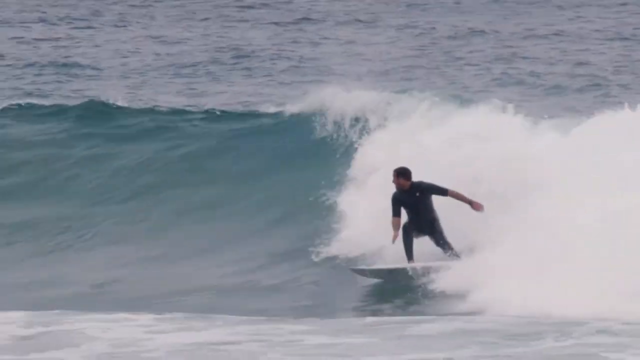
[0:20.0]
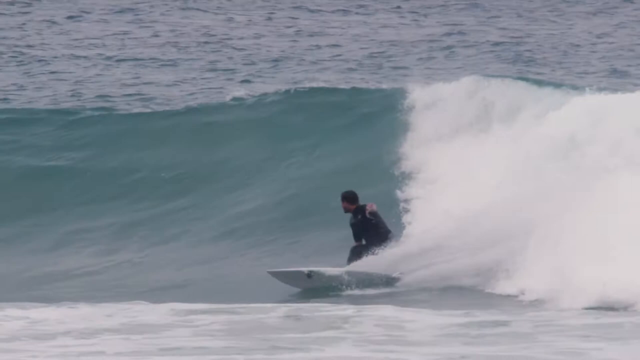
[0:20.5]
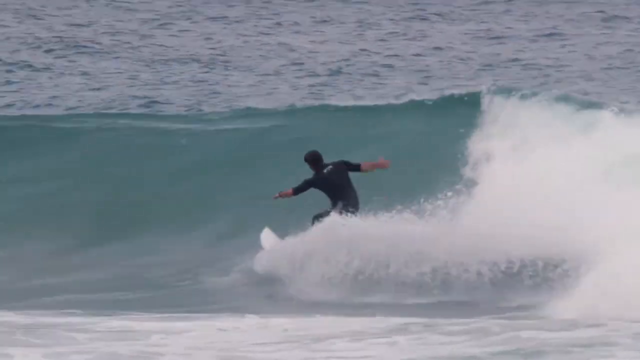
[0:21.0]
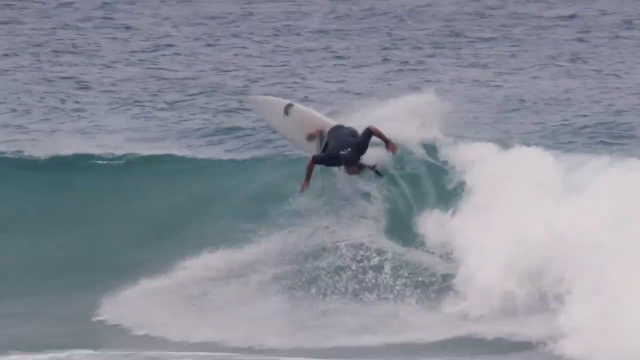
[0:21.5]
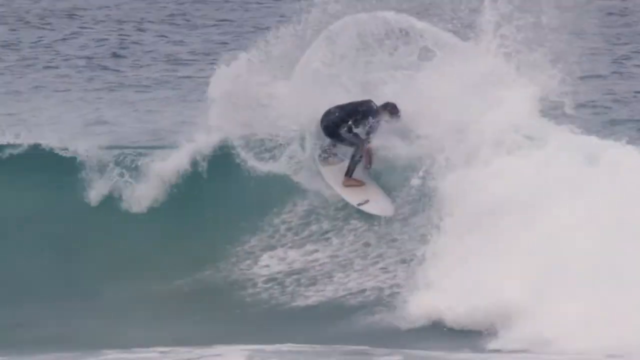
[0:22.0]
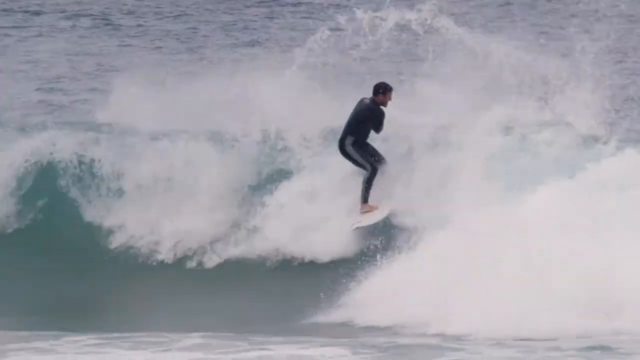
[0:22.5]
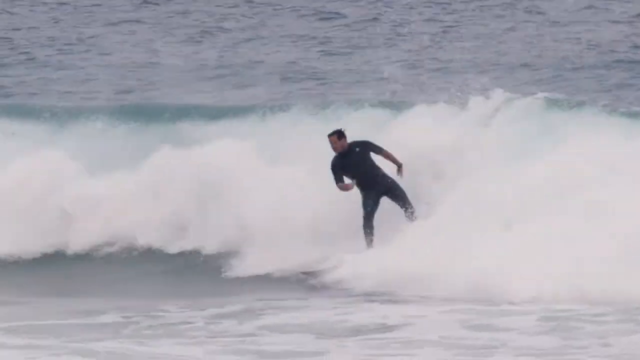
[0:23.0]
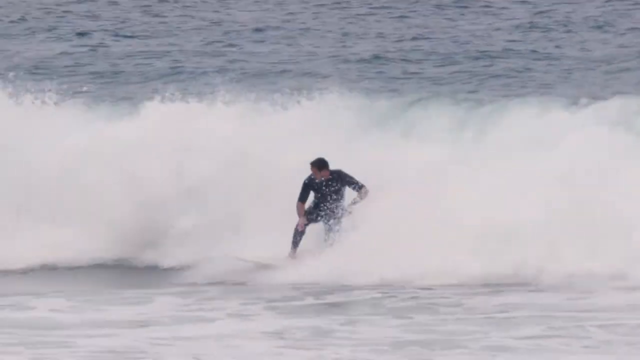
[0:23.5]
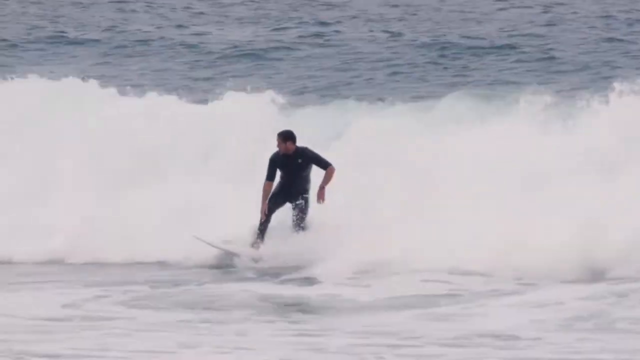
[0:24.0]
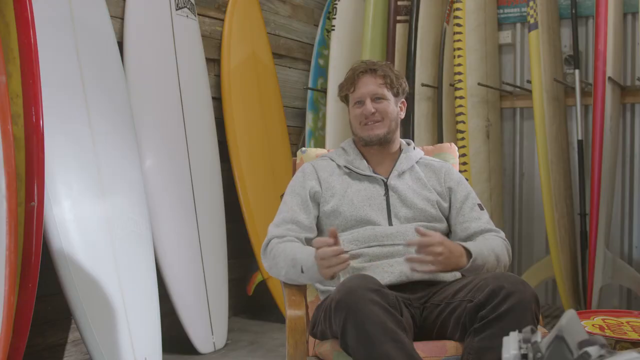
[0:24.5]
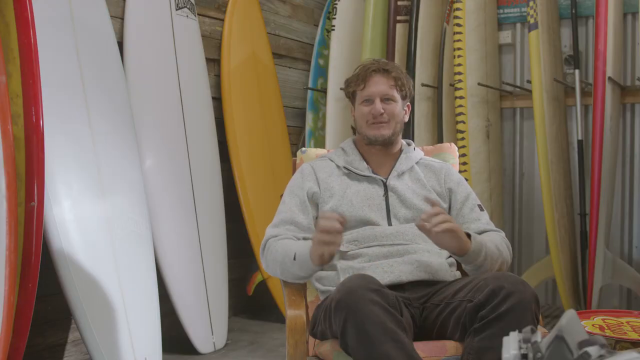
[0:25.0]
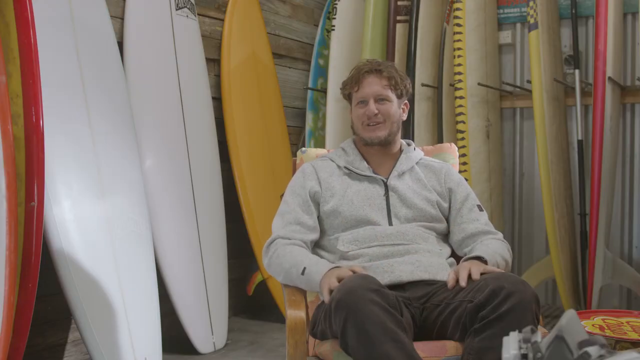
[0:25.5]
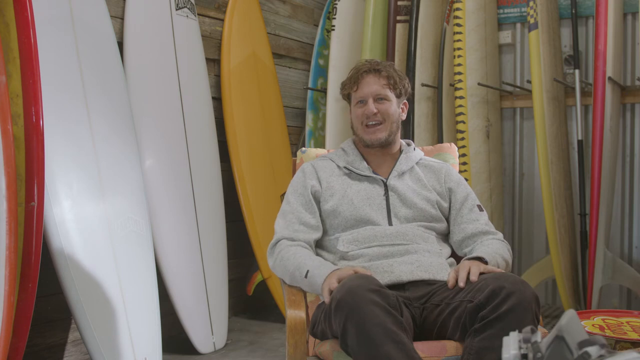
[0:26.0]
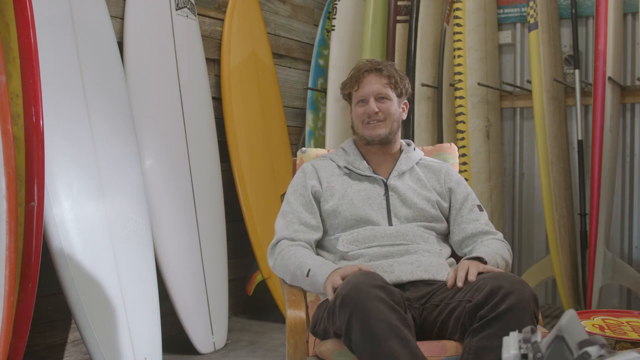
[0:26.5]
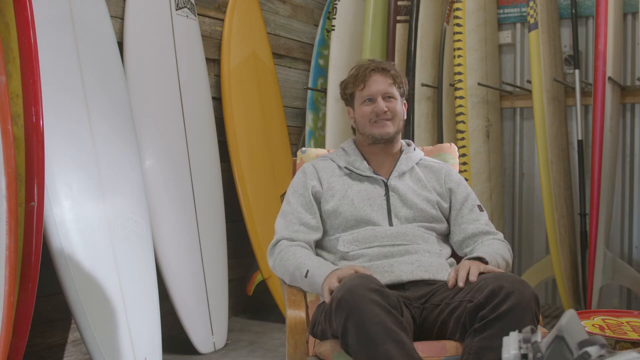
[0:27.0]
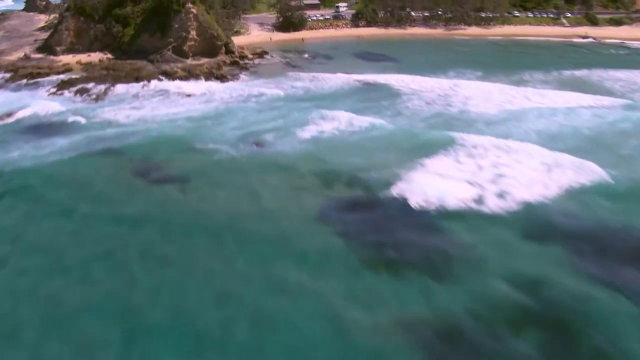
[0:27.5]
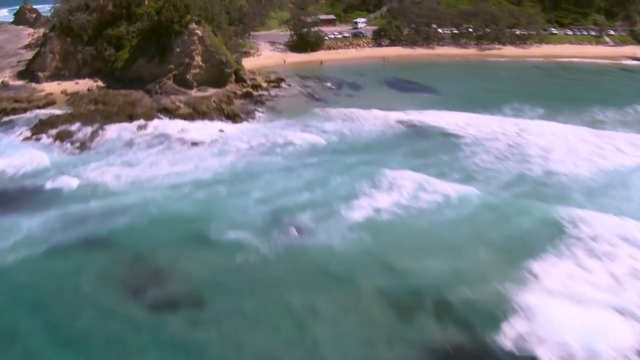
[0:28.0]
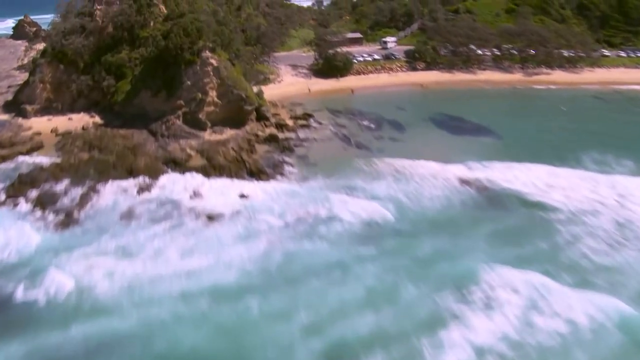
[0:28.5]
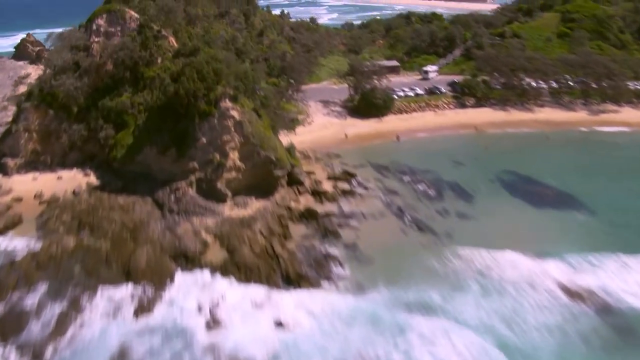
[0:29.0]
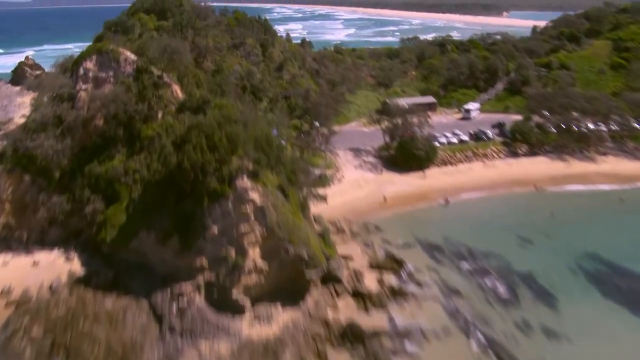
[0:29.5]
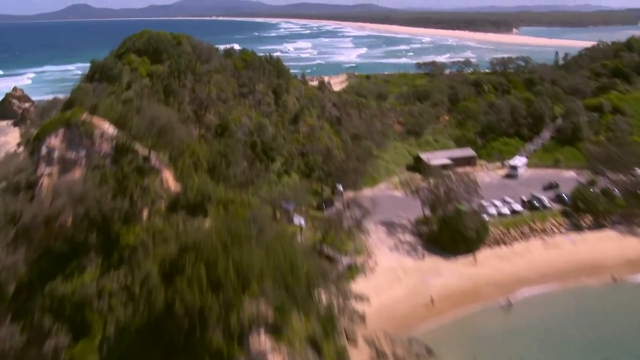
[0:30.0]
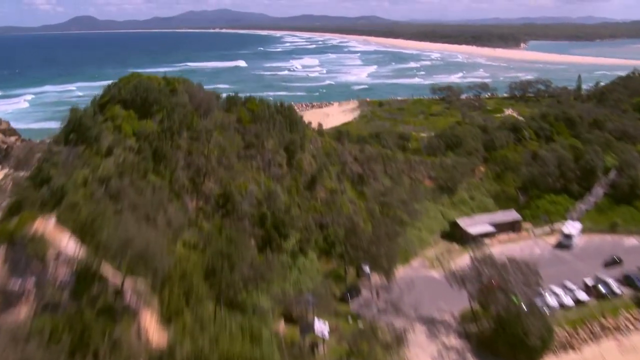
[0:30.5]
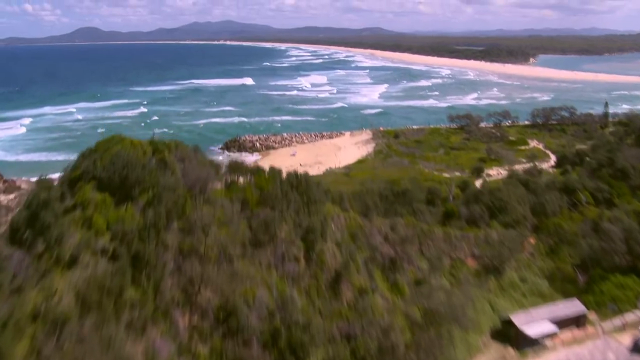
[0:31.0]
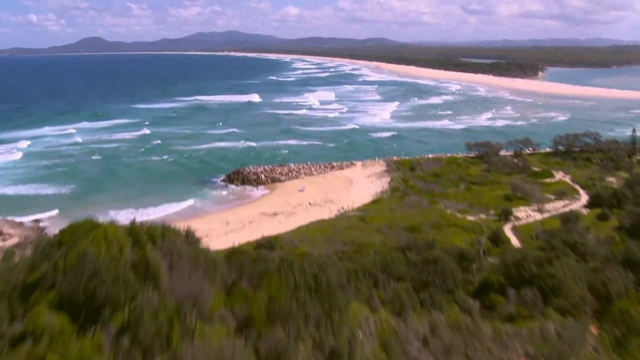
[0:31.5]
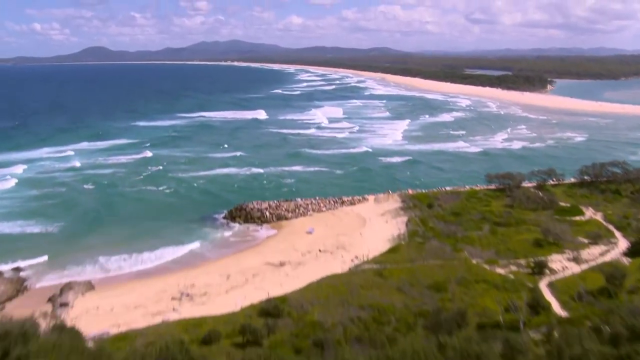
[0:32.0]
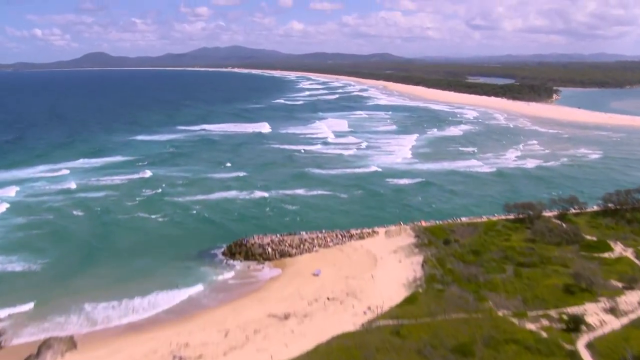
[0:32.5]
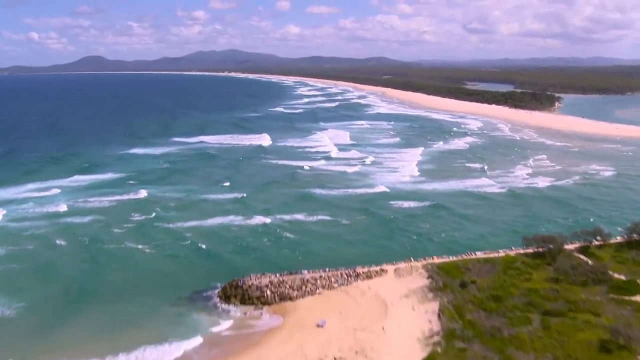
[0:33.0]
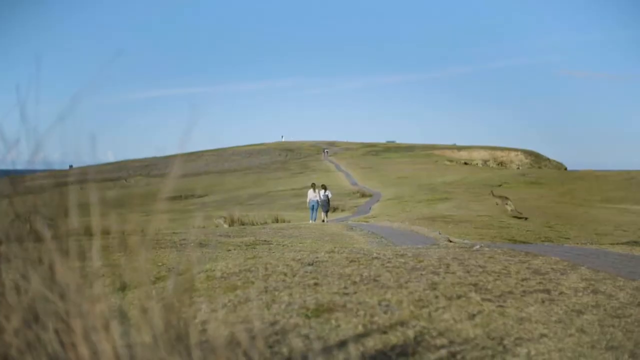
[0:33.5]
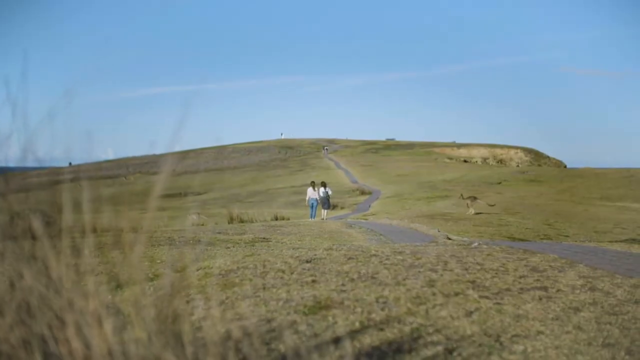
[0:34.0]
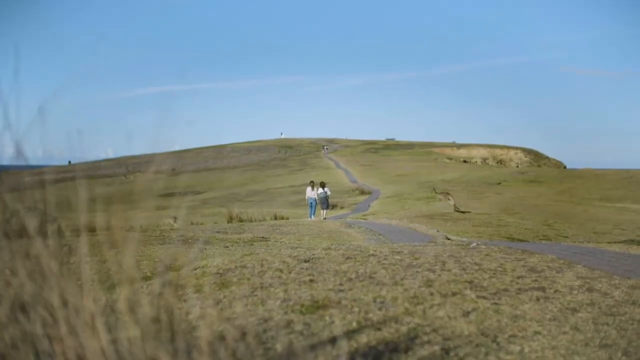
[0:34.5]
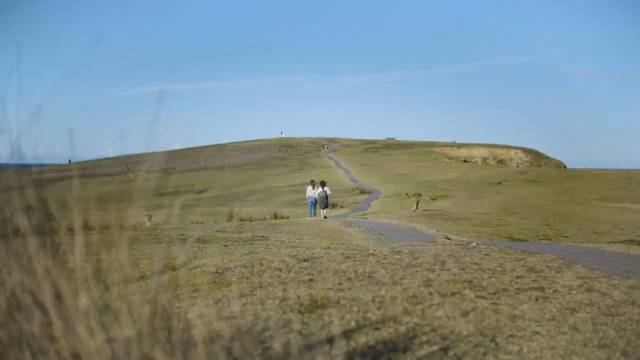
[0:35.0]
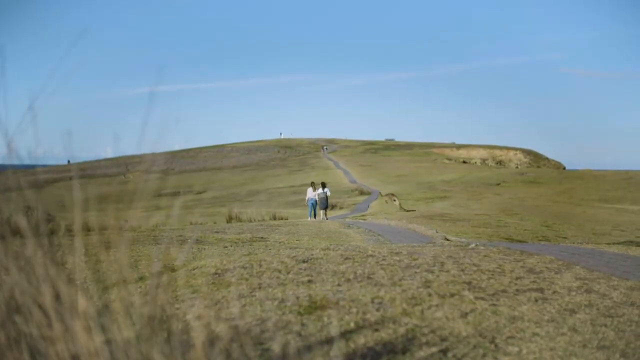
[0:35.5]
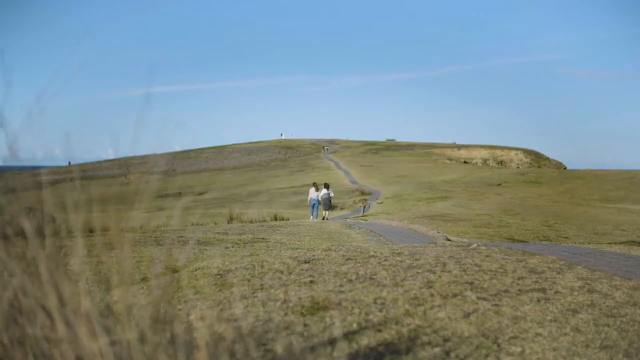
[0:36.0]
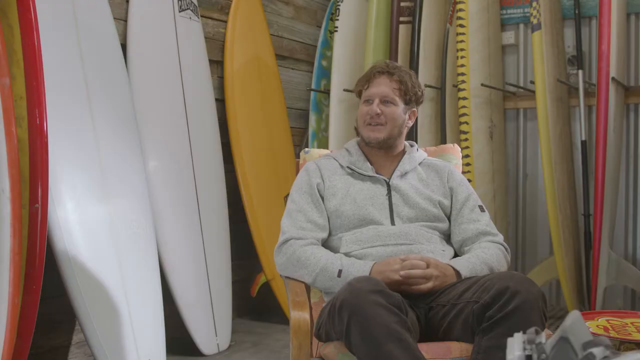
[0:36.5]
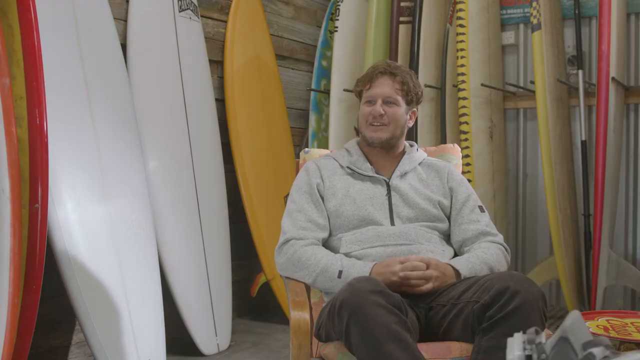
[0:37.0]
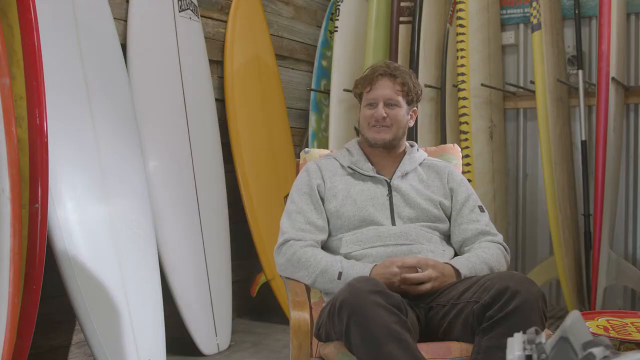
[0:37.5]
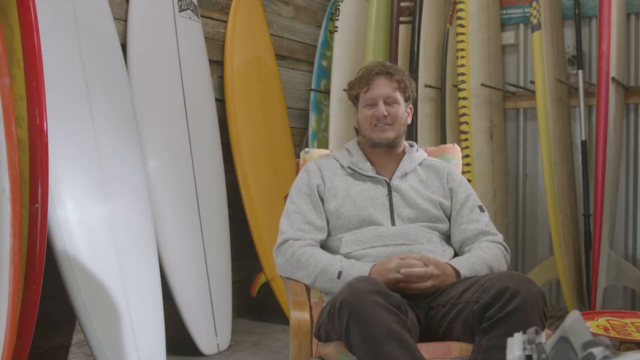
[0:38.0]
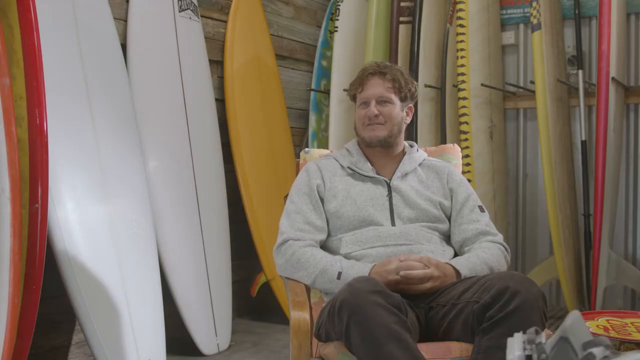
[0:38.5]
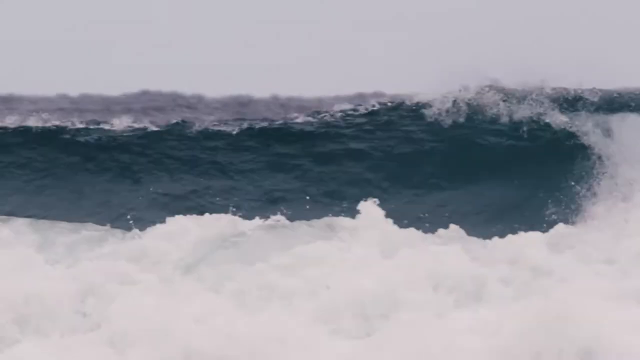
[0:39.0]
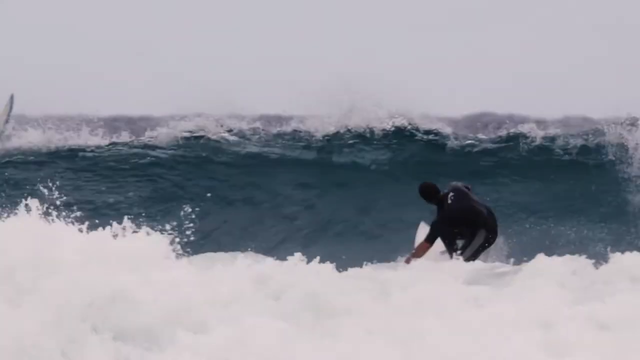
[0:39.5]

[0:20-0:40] The man continues surfing in a black wetsuit on waves that look maybe six feet high, kind of whipping around on the board. The scene switches back to him sitting in the chair in front of the surfboards, talking. Then the view moves out to the ocean, to what looks like possibly a spot where people can park to access the beach. A rocky hill extends into the water, and where the rocks are there is a lot more white foam in the waves. An aerial view passes over it, showing a really small beach on the other side. Next comes what may be a valley, with a path going up the hill, two people walking on it and a kangaroo jumping by. It cuts back to the man talking in front of the surfboards, then back to him surfing.